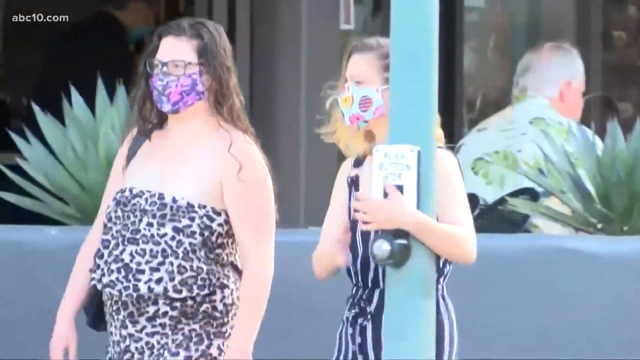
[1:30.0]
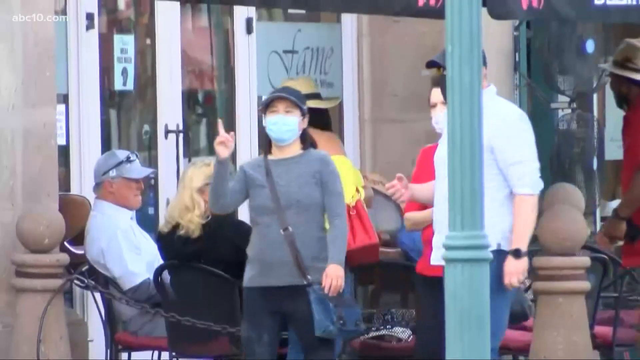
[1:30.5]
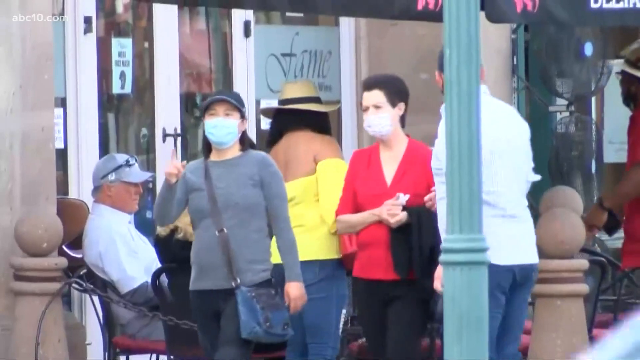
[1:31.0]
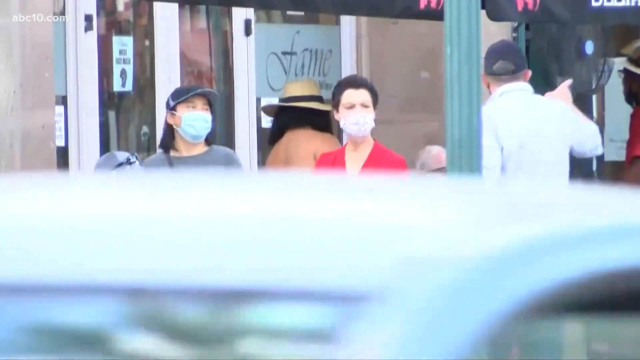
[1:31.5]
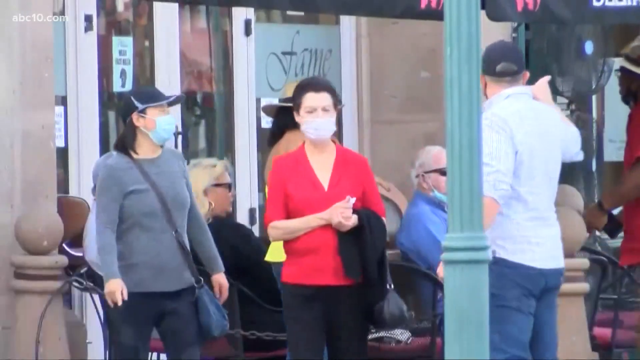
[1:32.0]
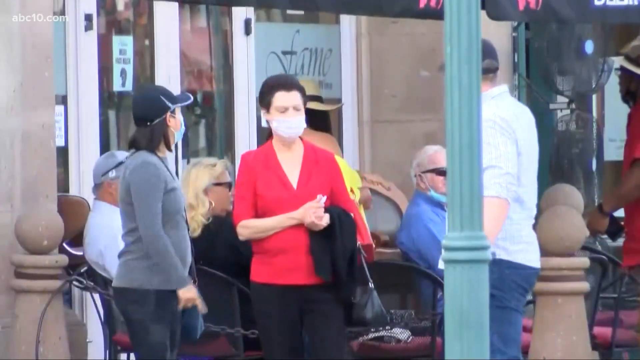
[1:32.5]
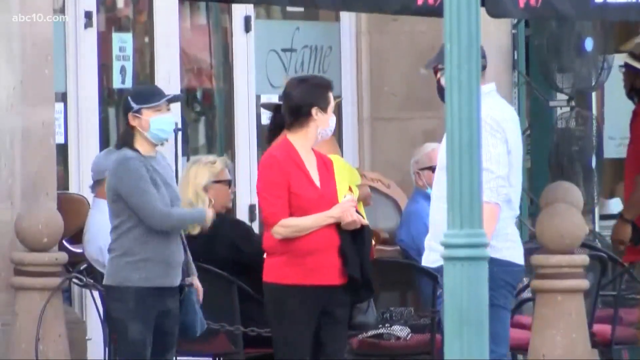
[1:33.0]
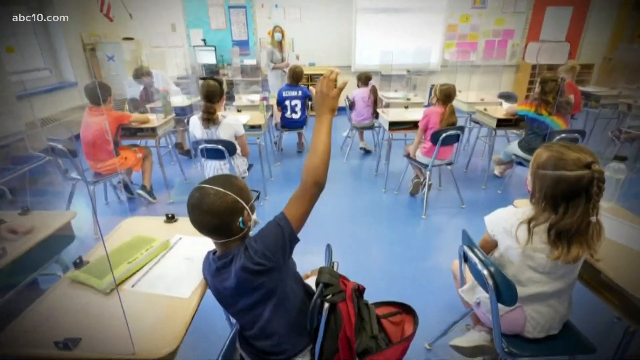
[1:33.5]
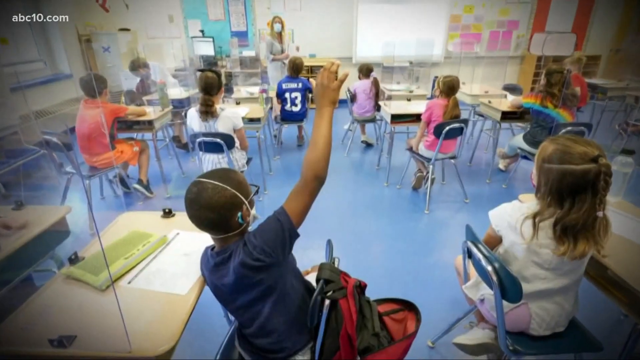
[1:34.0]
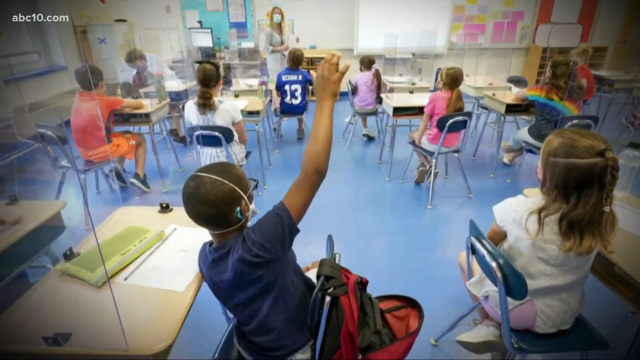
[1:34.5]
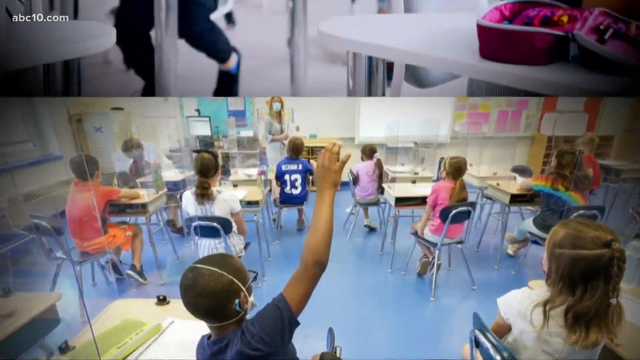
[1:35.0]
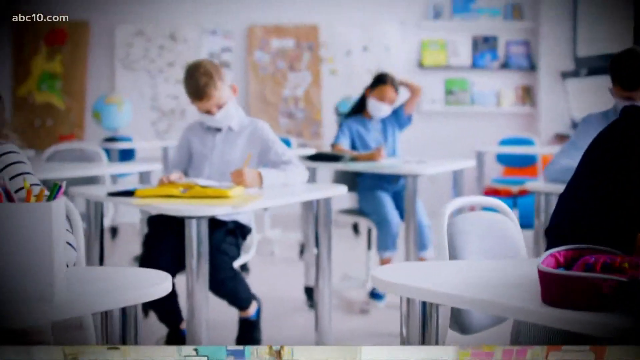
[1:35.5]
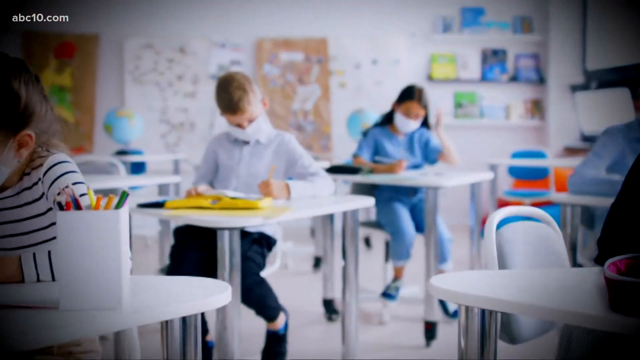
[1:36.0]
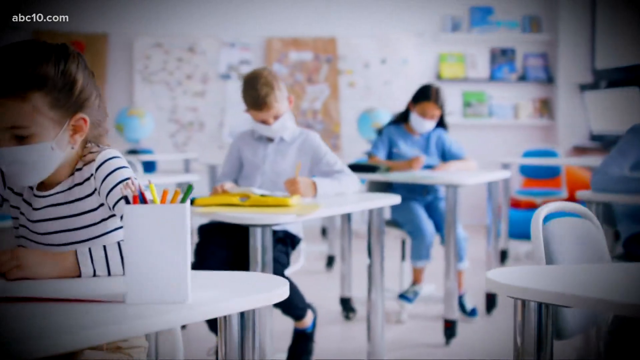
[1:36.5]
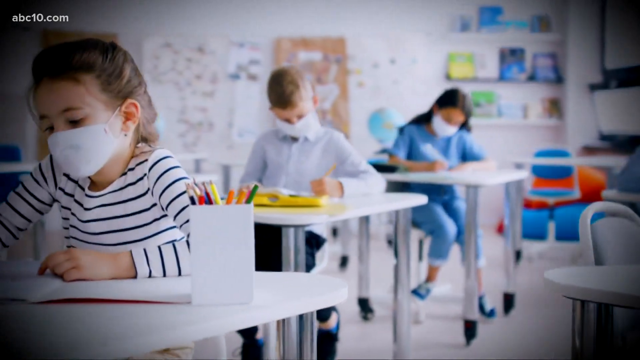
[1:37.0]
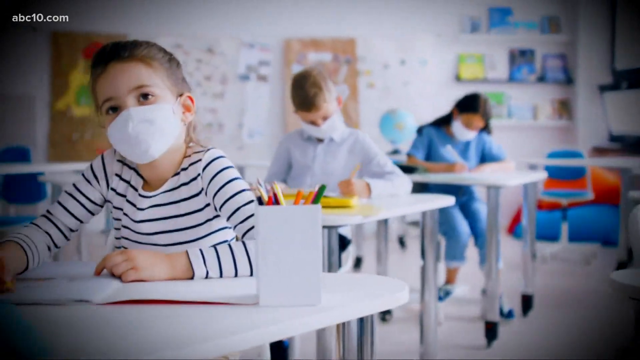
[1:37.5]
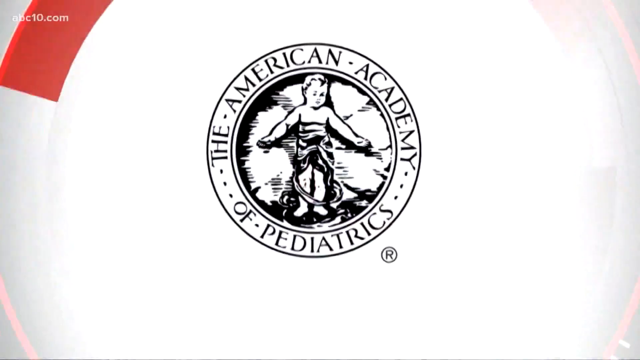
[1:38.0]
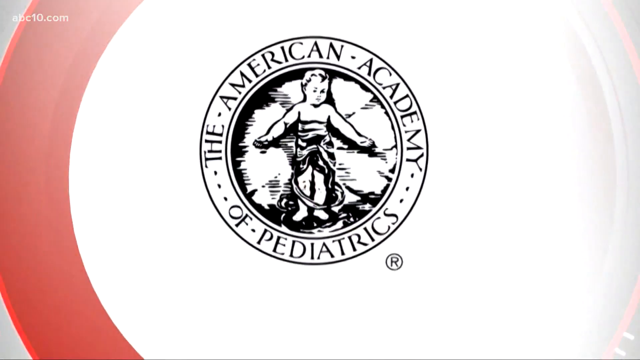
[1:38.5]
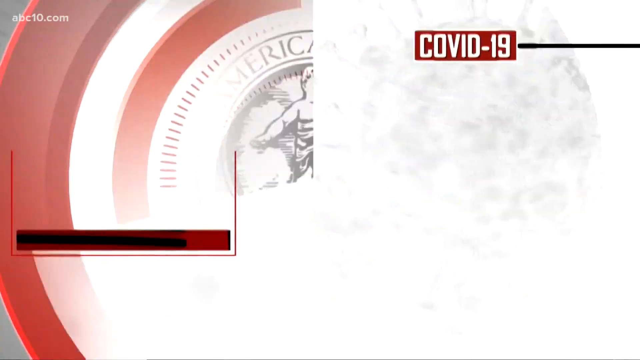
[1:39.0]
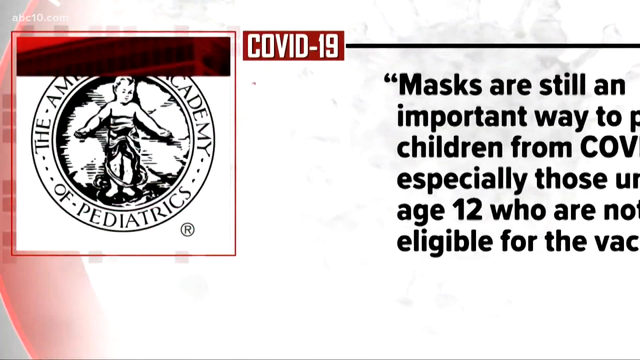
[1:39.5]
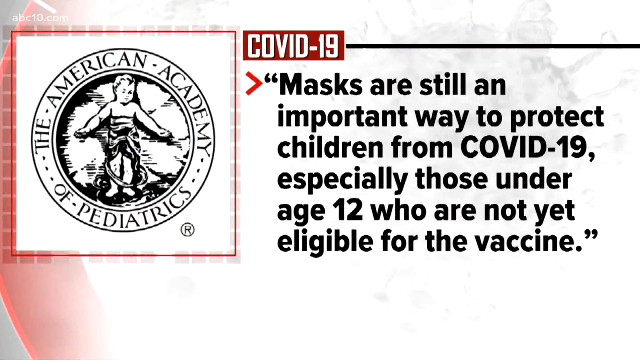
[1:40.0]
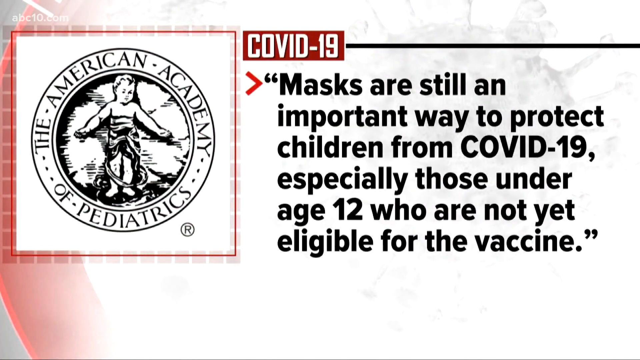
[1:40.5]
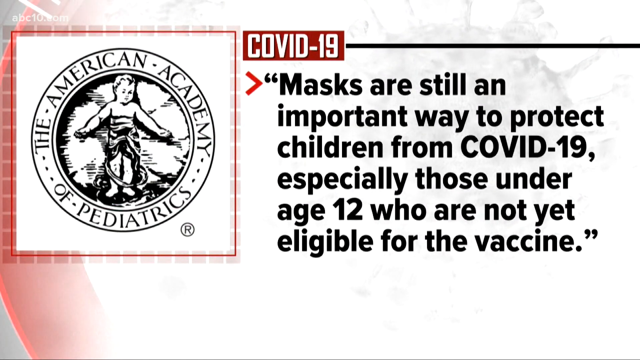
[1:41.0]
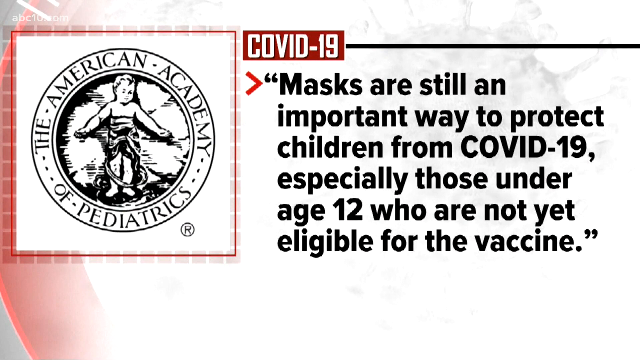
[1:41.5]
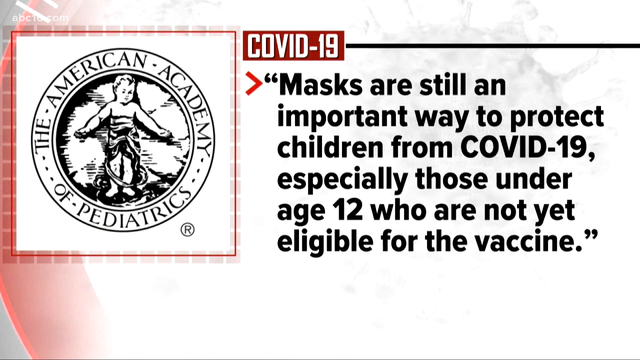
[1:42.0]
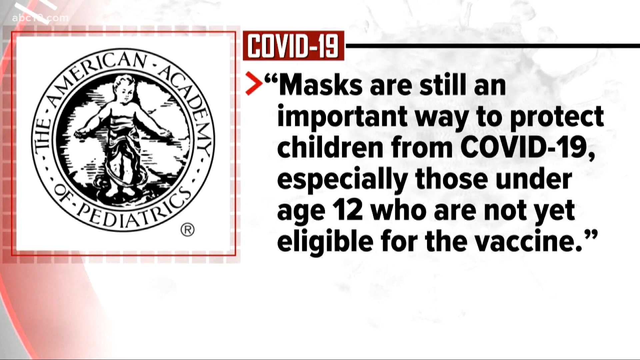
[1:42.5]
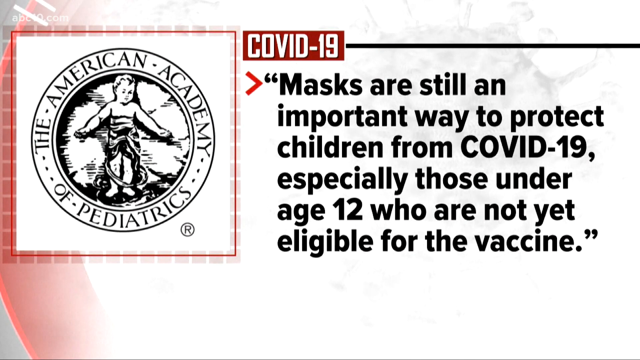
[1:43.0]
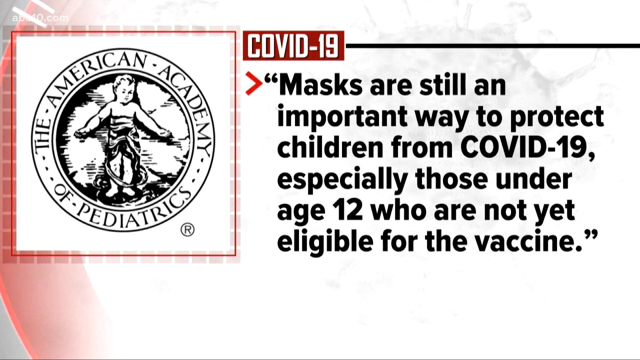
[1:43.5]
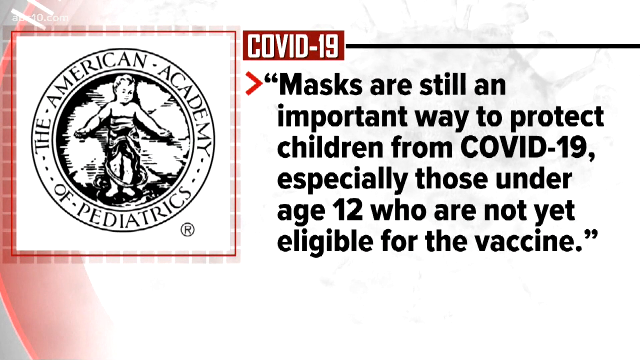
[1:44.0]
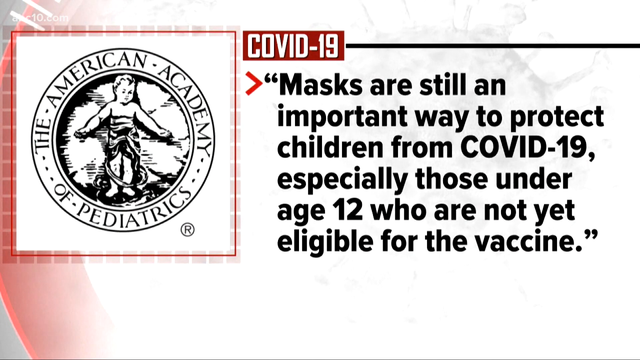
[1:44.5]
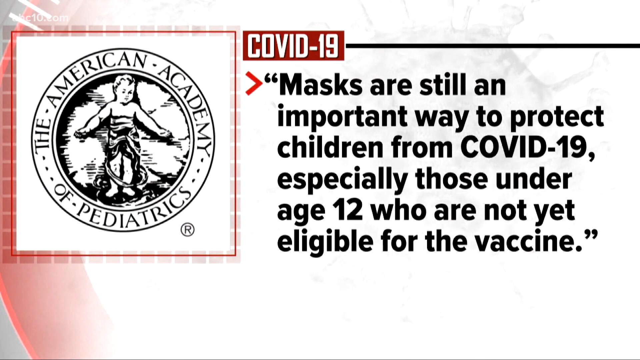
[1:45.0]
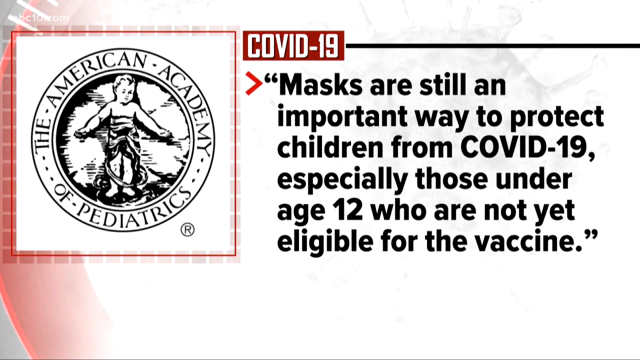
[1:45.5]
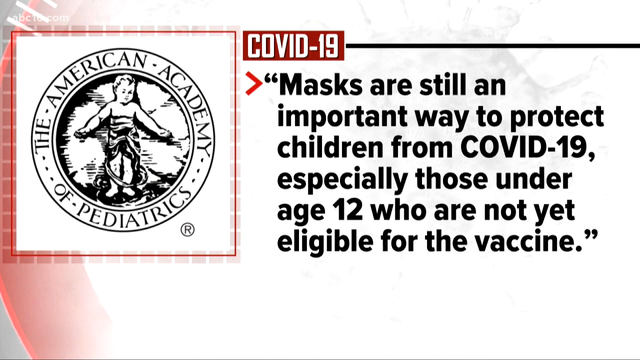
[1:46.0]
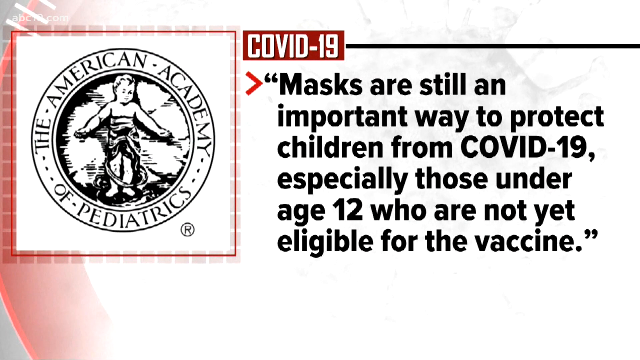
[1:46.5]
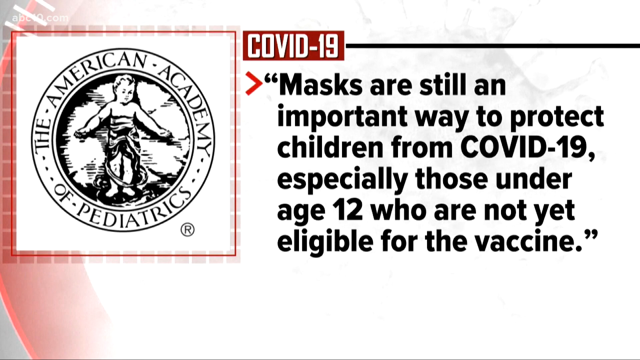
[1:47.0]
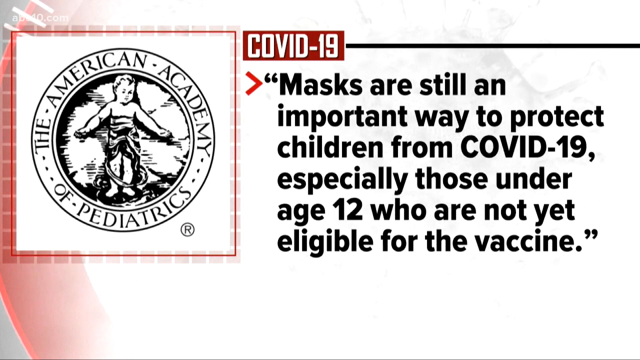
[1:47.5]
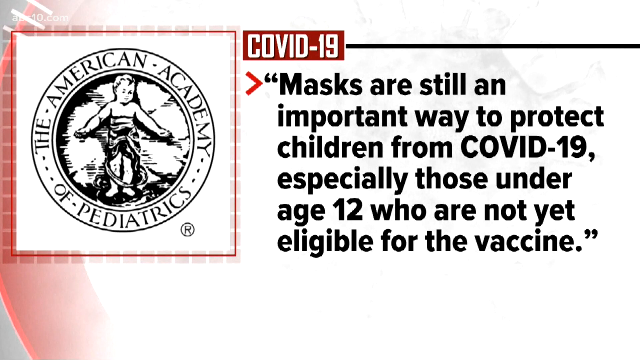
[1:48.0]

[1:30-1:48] The video is from abc10.com. Two women walk down the street, both wearing masks. One of them touches a green pole in front of her to the left, which has a button to press to walk across the street. Next, people are outside a store, most of them wearing masks; some are standing and walking, while others are sitting. A picture then shows children in a classroom setting with a teacher at the front of the class wearing a mask; the kids all appear to be wearing masks as well. Different shots of the children with masks follow, and at the end a banner says "why masks are still important, especially for children 12 and under who are not eligible for the COVID-19 vaccine yet."